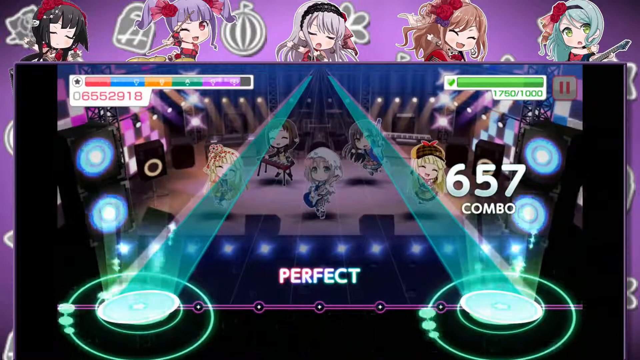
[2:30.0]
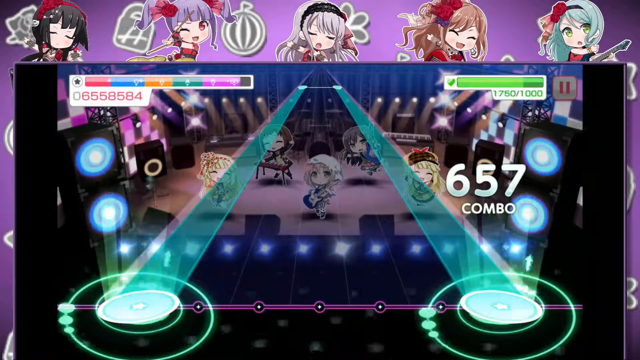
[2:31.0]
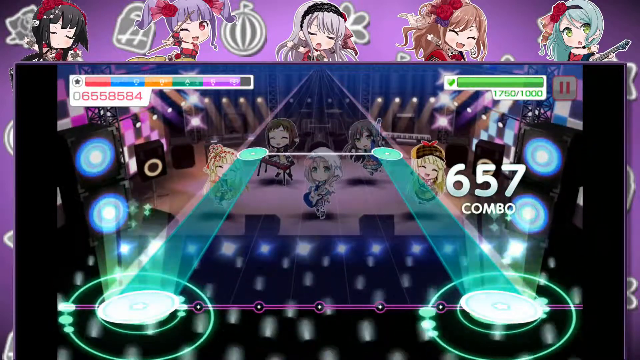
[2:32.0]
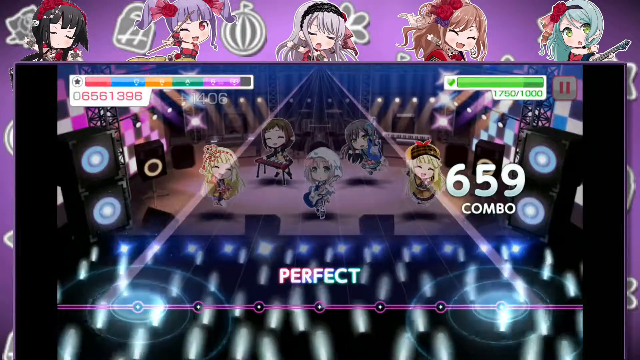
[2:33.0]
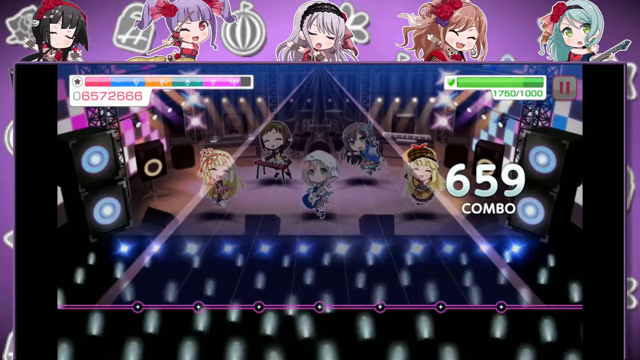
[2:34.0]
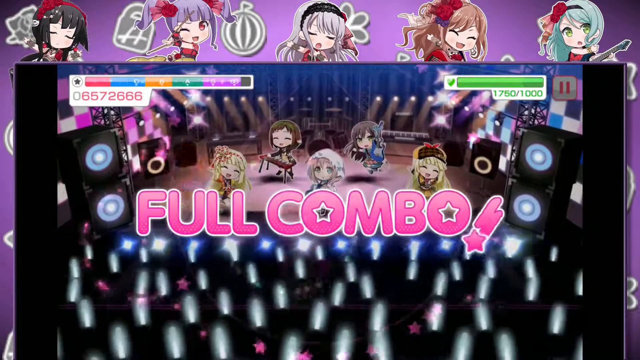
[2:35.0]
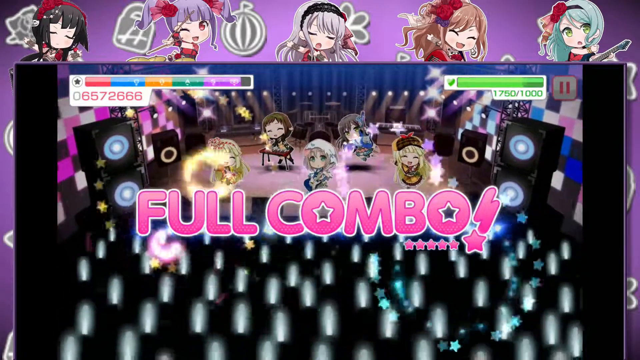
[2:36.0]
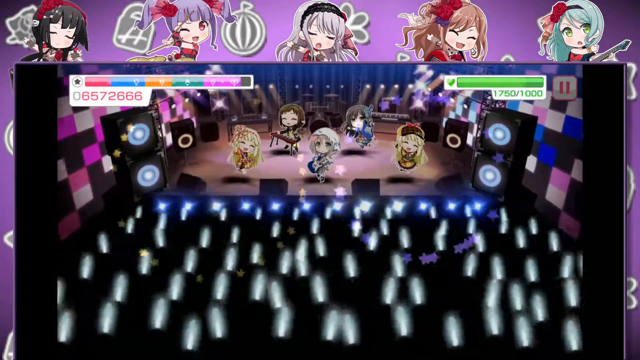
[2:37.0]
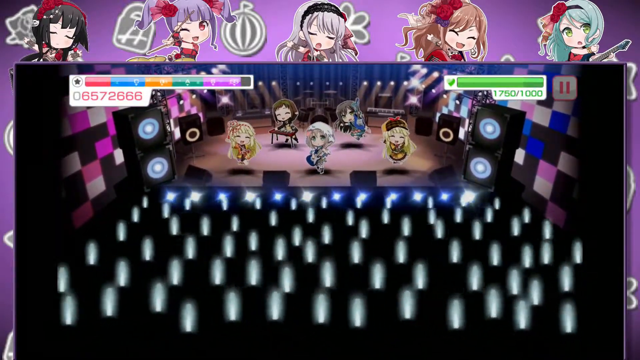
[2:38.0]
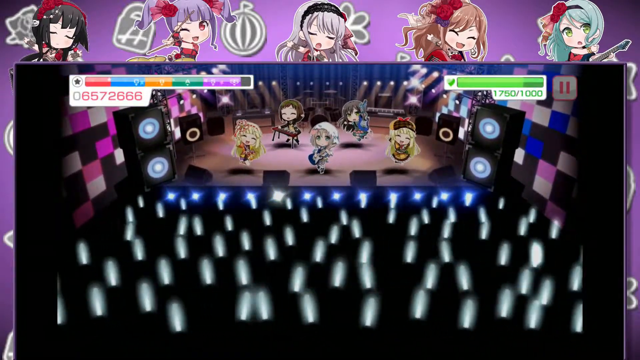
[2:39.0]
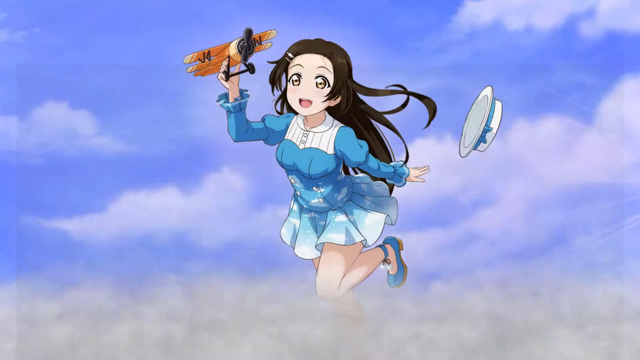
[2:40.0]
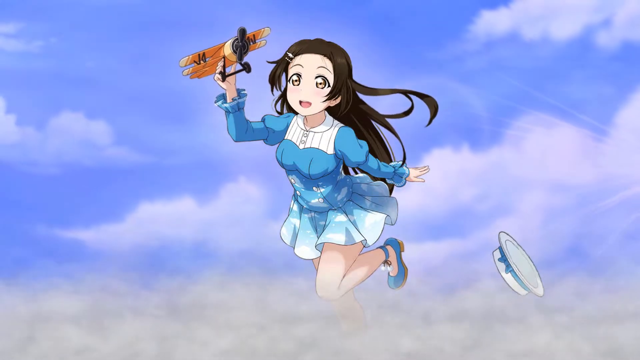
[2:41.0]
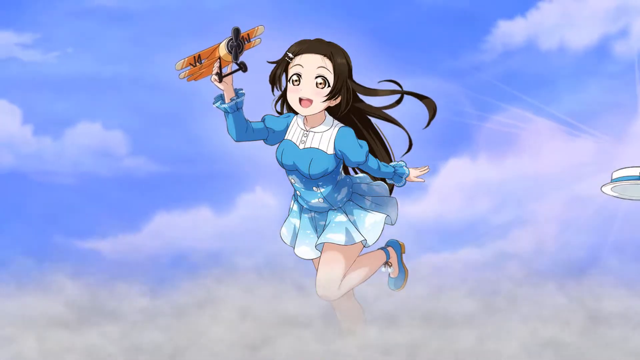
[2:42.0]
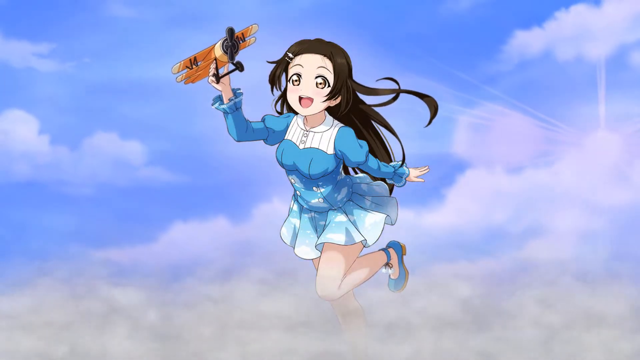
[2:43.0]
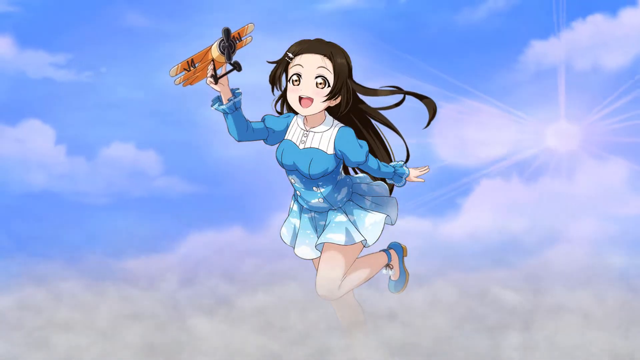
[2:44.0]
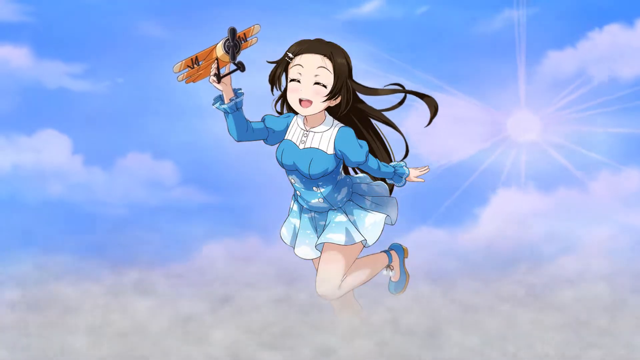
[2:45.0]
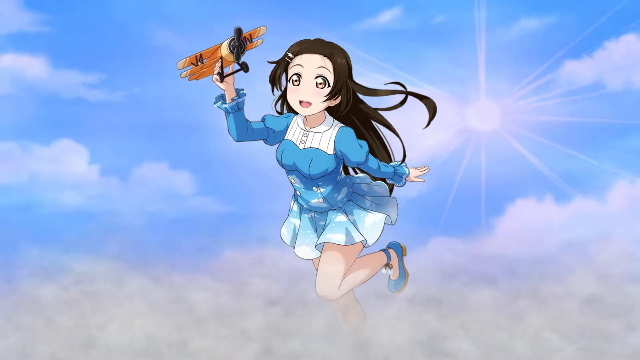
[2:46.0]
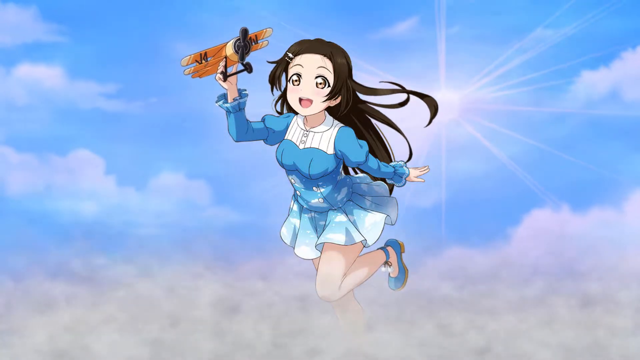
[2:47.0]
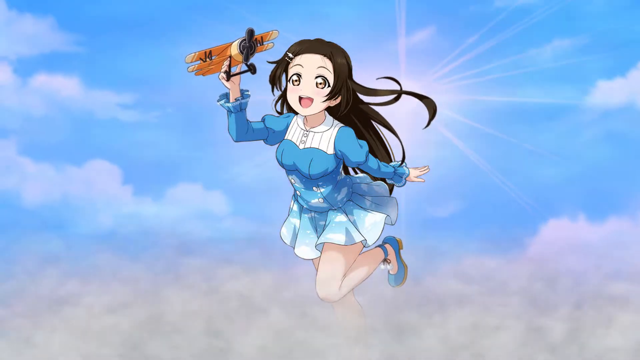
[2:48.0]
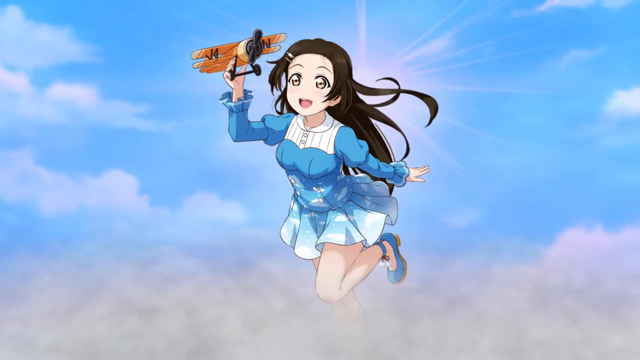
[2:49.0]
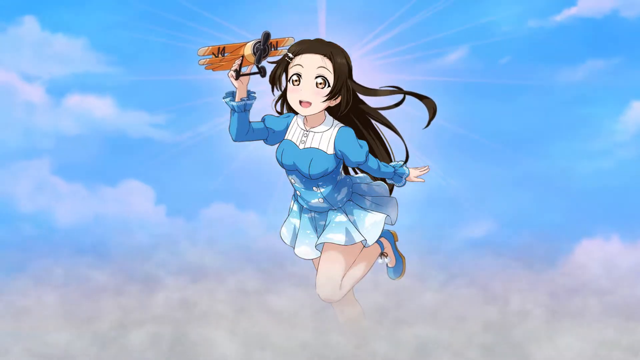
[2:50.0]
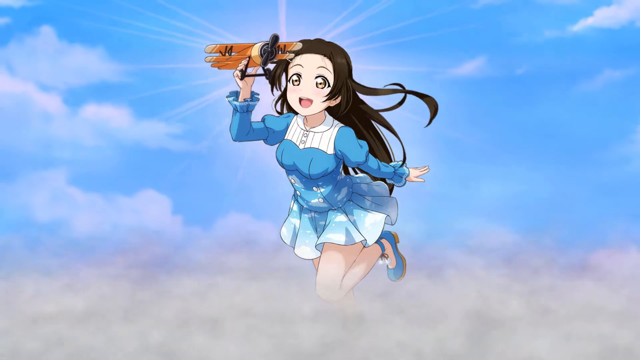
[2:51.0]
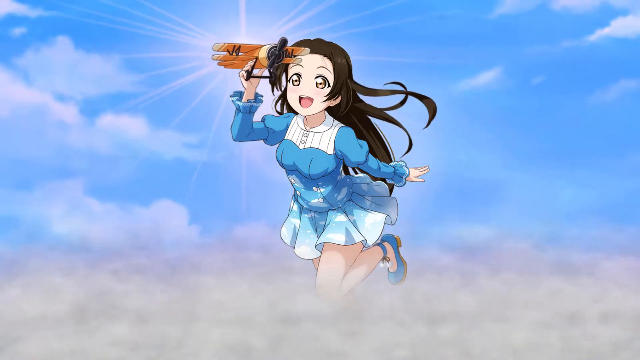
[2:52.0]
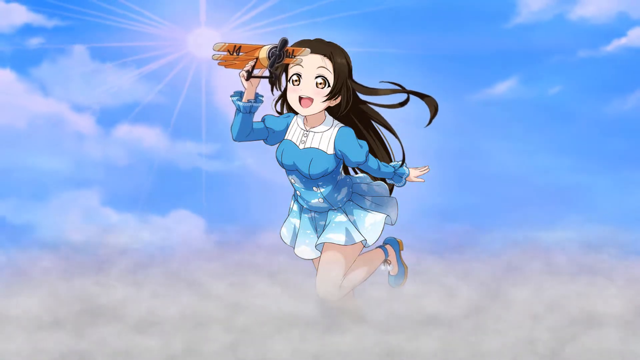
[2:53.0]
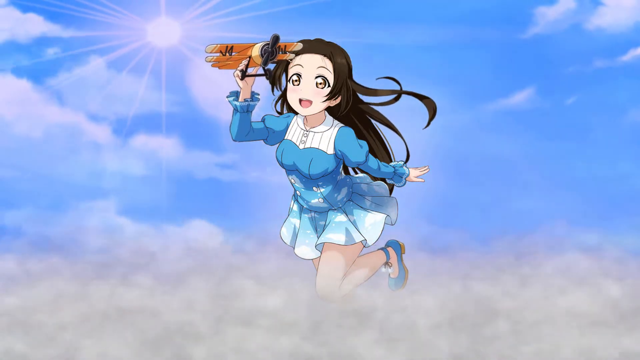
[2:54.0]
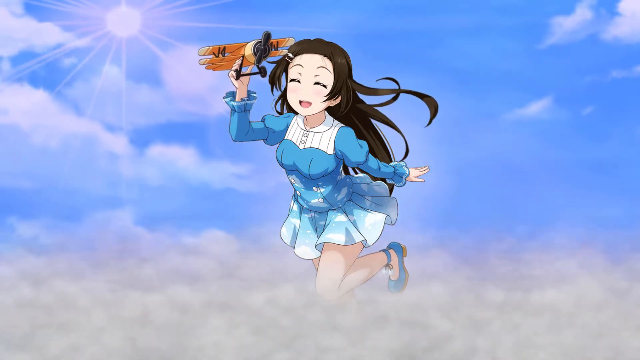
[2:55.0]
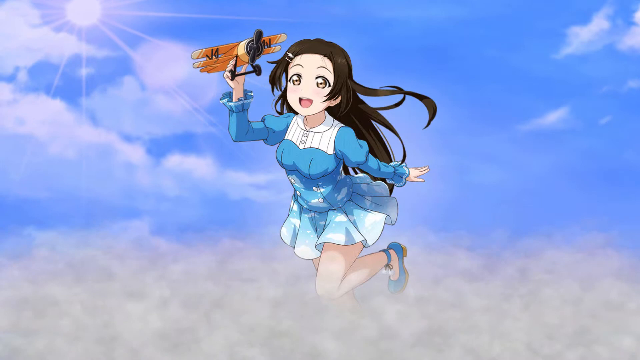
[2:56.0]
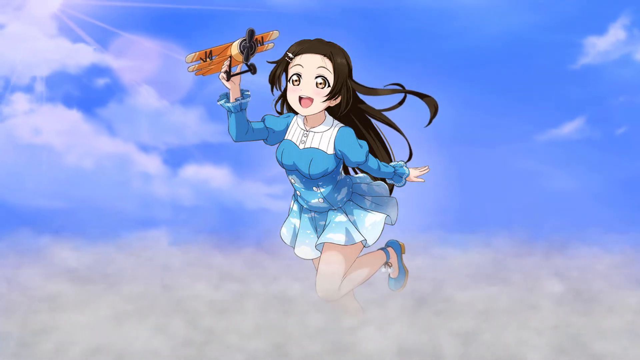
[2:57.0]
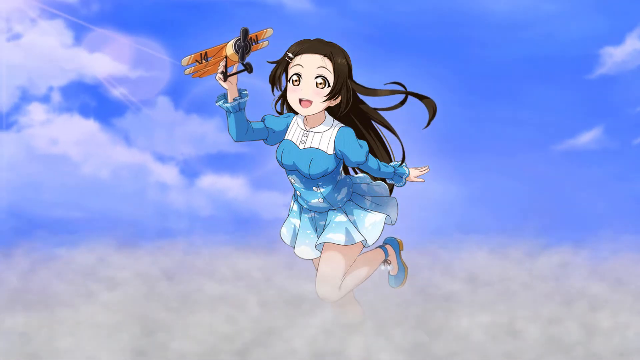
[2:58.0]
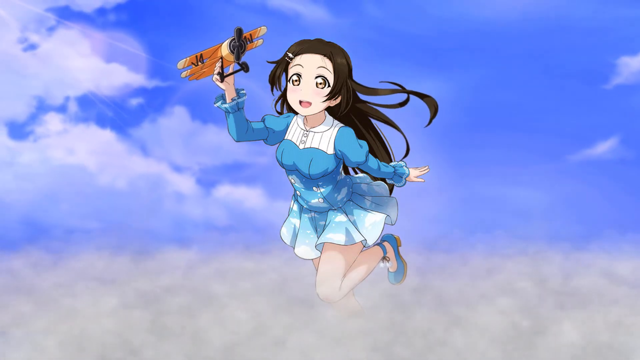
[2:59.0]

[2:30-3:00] A music game is being played on a phone. A song is playing, with buttons on screen being pressed simultaneously and held as the music progresses. The buttons disappear and the guitar disappears as well, seemingly because the music has ended. The words "full combo" in pink with a star theme appear on the screen, and in the background, where a chibi band of anime girls is playing, some kind of small fireworks of various colors appear. There is a small shift in the camera, and the game slowly fades away, leaving only an anime girl flying in the sky holding an orange model airplane in her hand. She wears a blue dress and some kind of blue shoes. Some kind of wind can almost be seen, and the sun comes out from behind as the clouds shift in the sky. She has her eyes closed and is smiling happily as the sun passes behind her. The clouds under her become thicker, and the sun disappears.